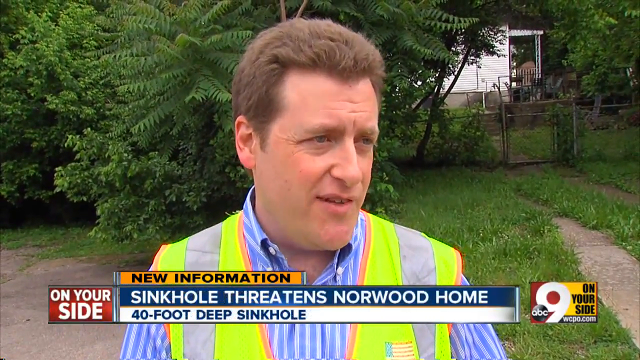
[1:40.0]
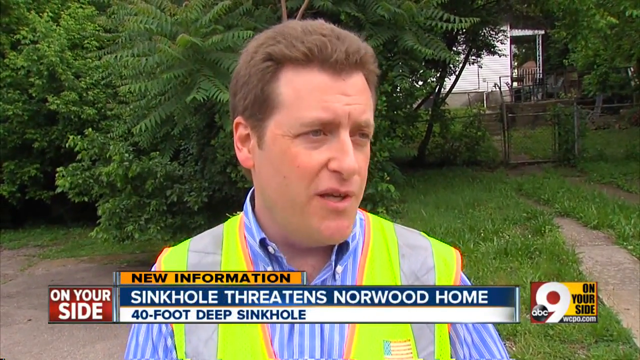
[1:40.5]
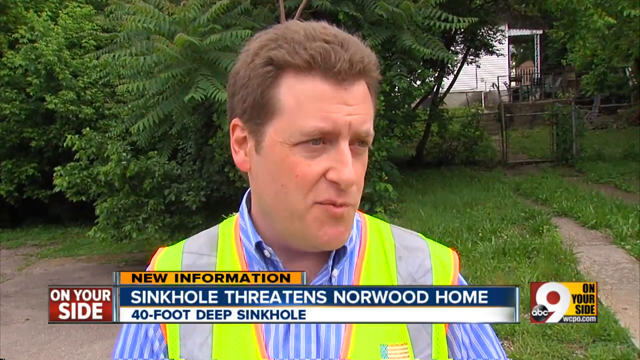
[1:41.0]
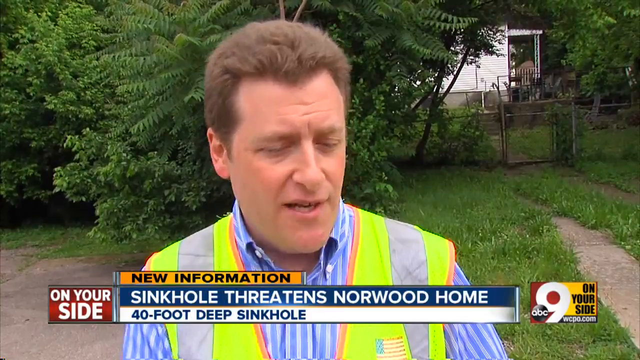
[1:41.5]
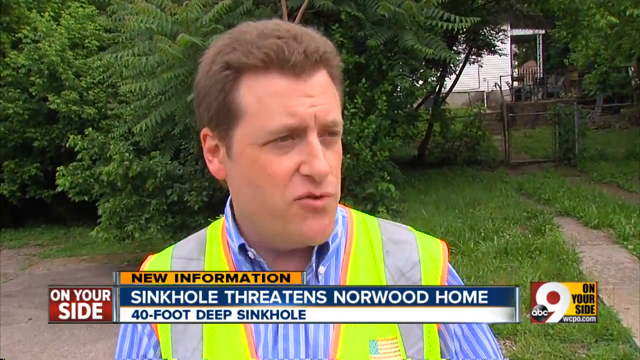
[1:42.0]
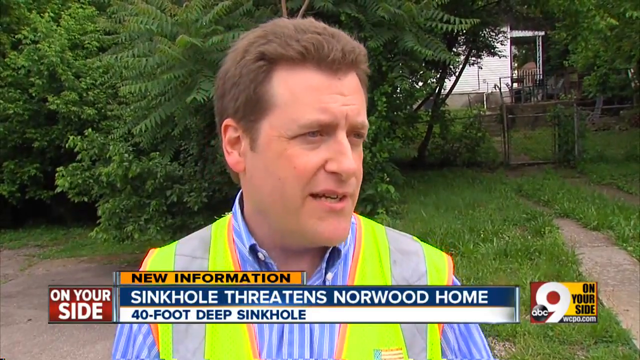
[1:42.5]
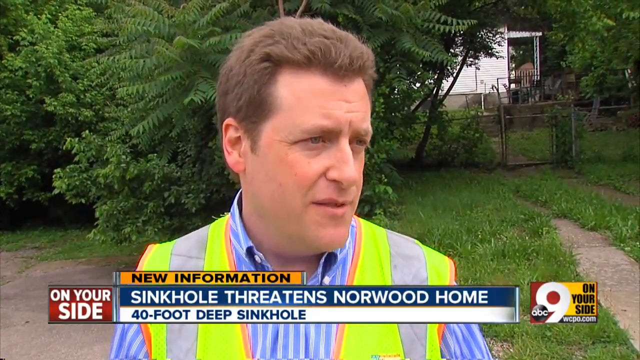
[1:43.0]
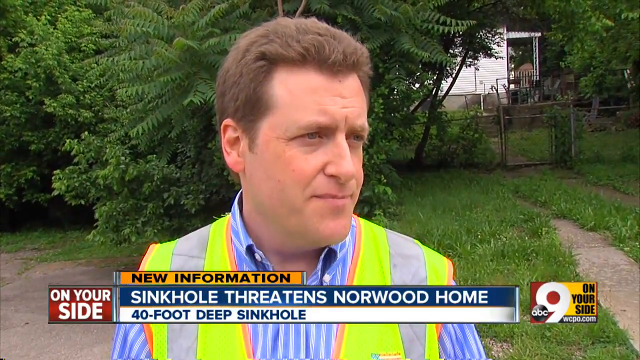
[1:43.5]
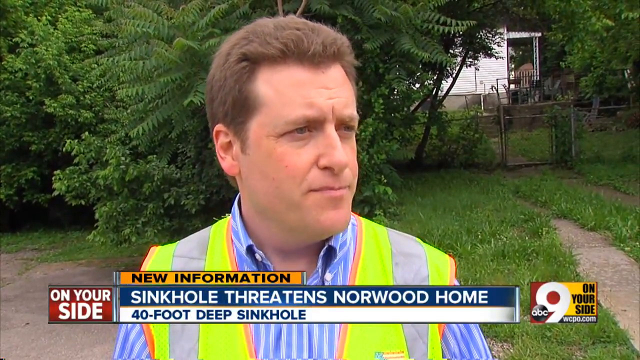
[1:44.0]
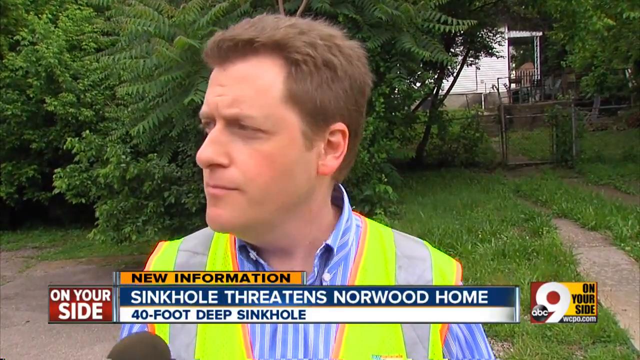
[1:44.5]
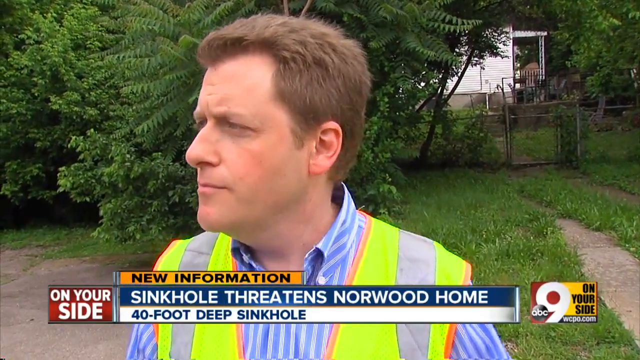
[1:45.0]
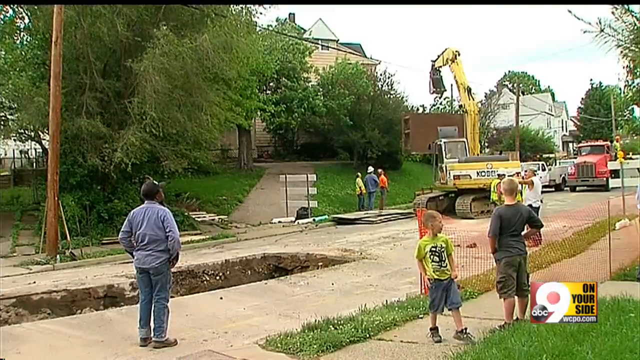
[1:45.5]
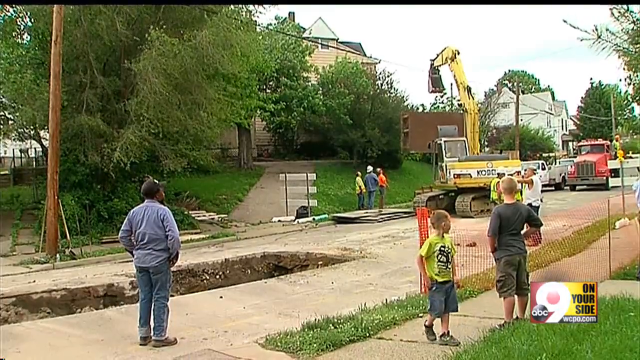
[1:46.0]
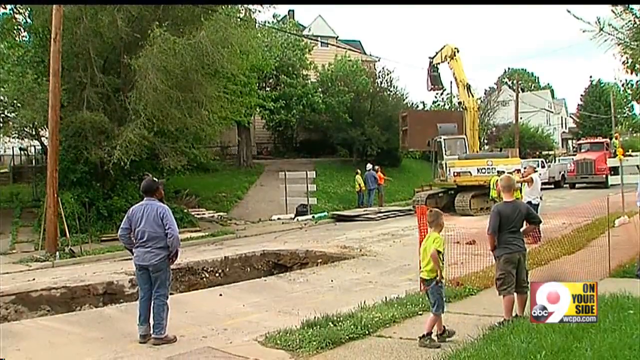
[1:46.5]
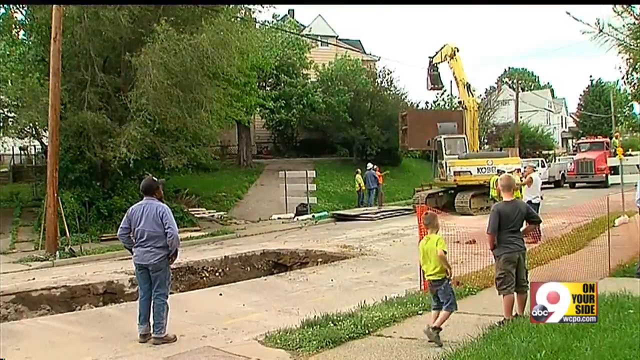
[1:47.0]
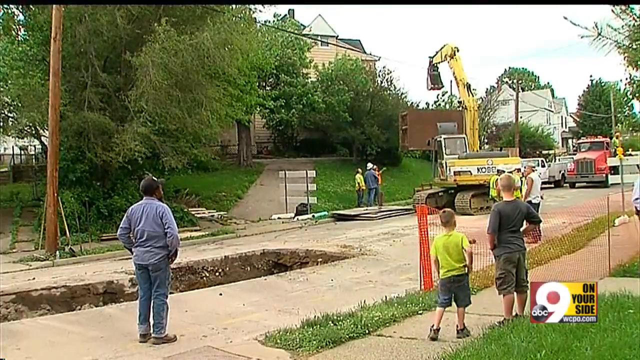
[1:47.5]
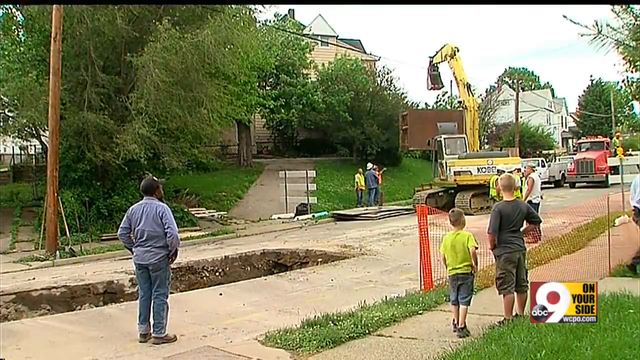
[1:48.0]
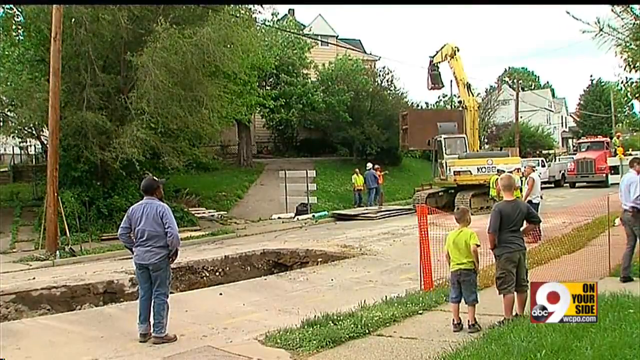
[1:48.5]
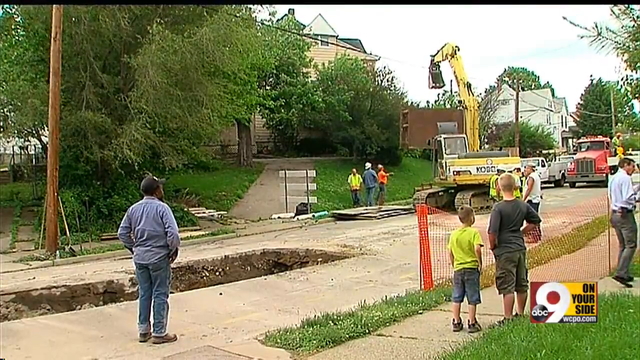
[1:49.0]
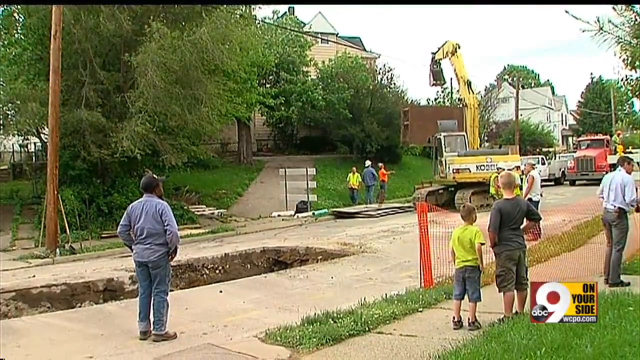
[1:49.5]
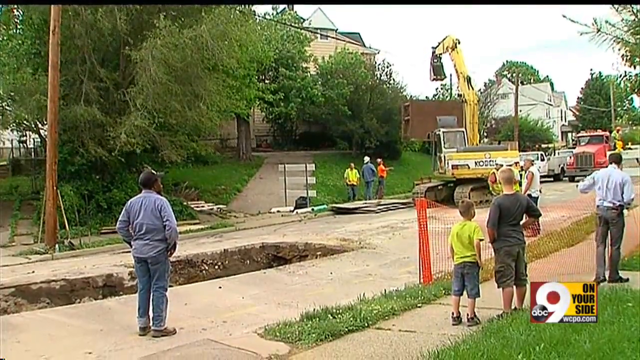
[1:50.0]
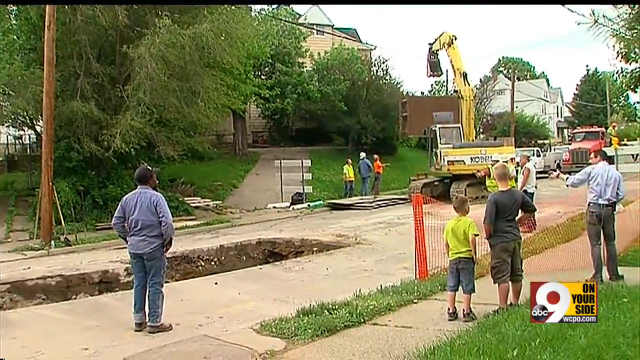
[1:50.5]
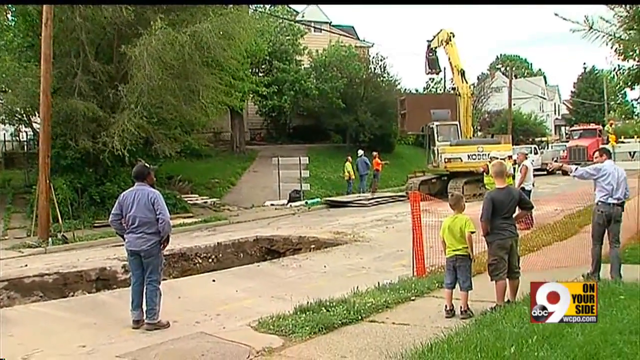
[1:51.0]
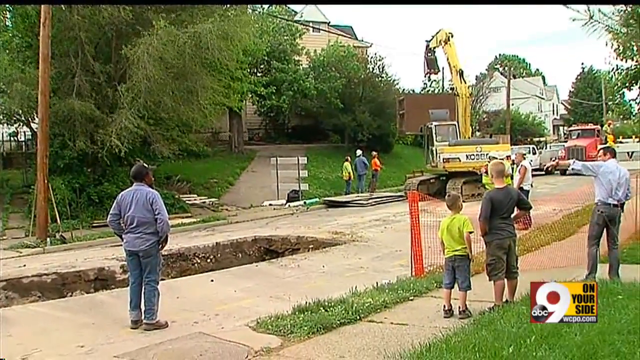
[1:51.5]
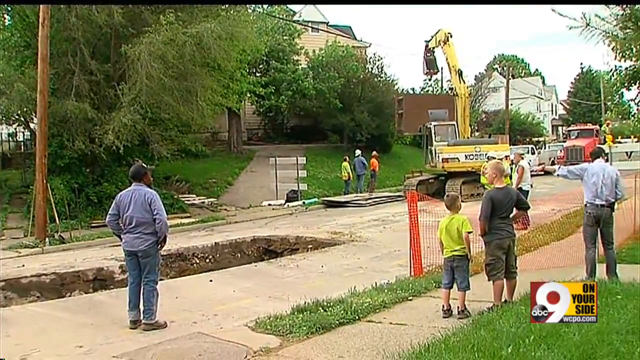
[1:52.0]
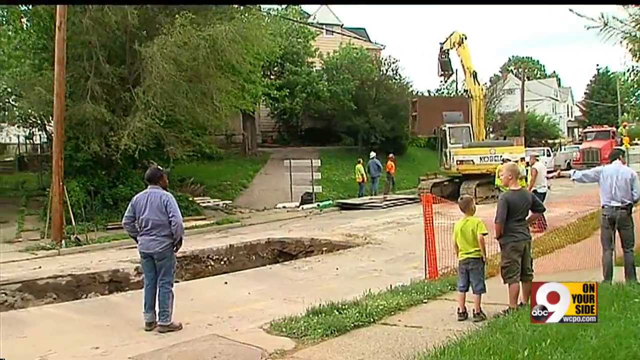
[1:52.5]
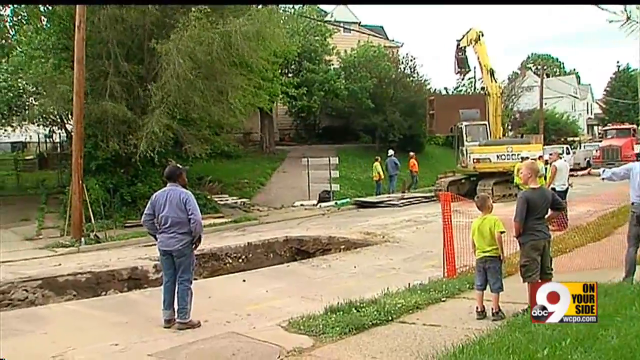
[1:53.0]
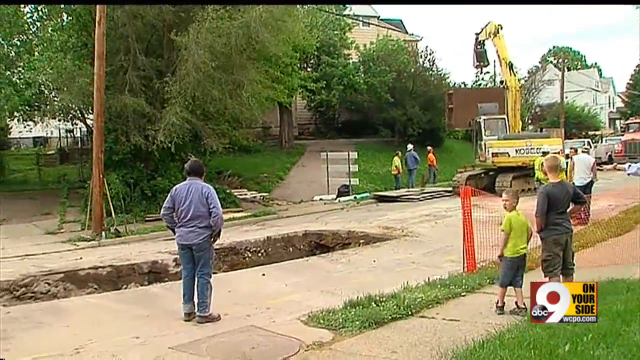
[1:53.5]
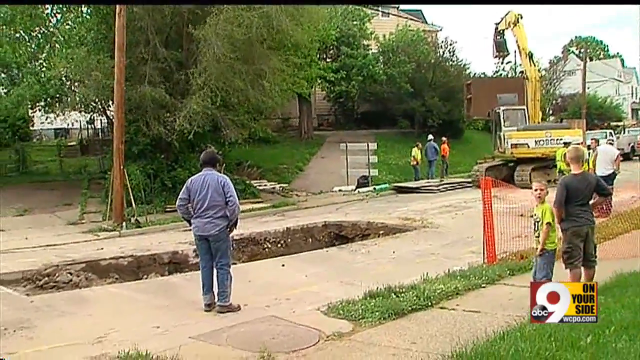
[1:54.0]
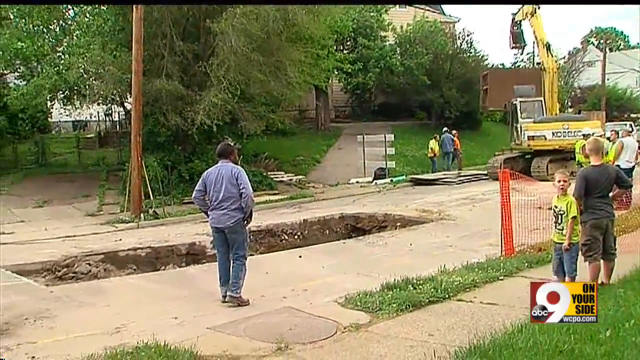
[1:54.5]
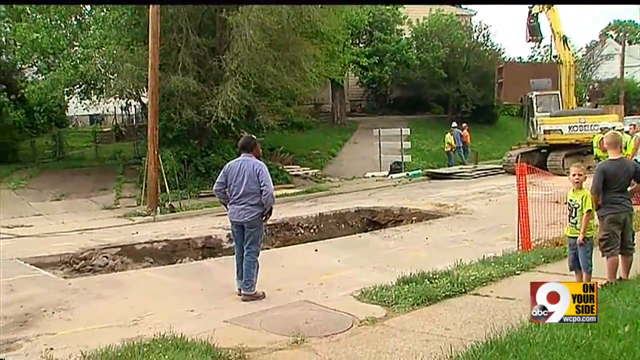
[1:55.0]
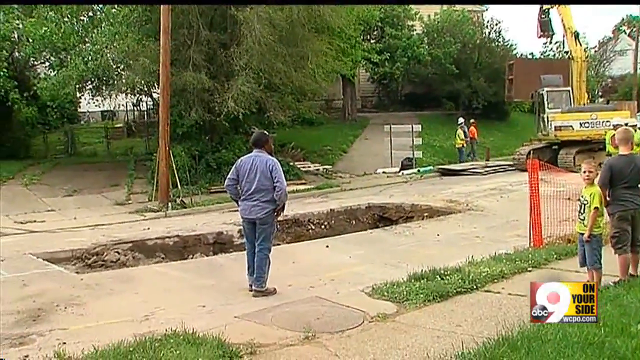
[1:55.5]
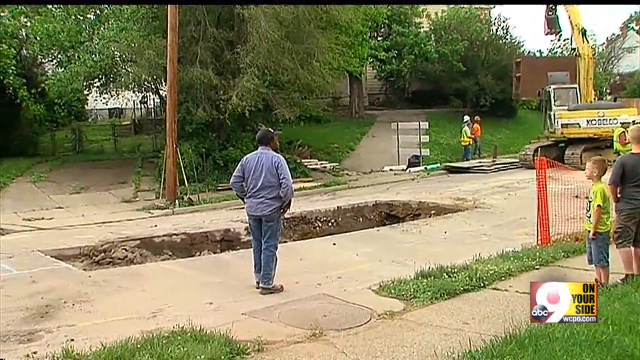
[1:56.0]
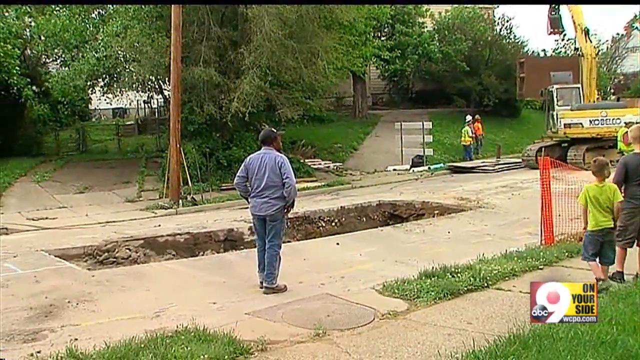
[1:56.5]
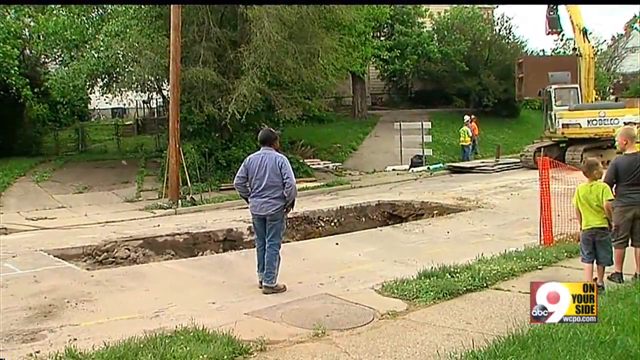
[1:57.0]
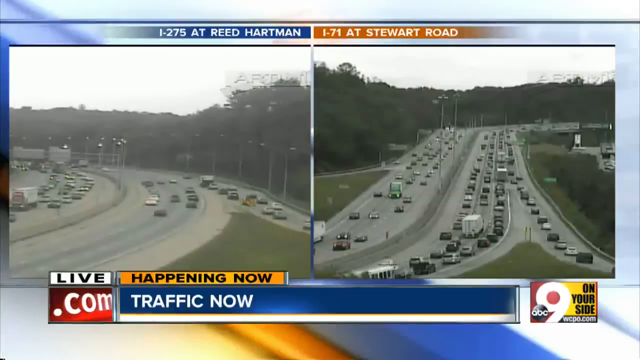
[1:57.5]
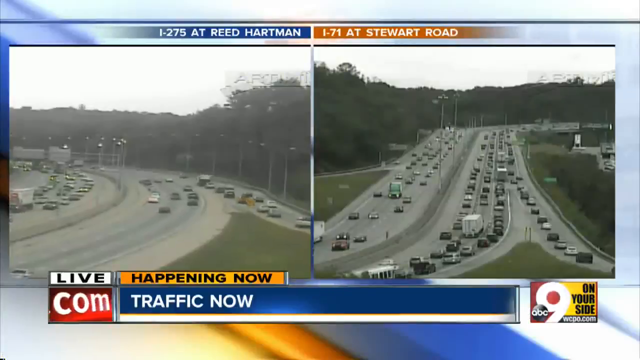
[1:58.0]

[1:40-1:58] The camera looks down into the sinkhole. Workers on the street have filled in the sinkhole and are spraying water on it. A man in a green vest is visible, and the homes on the street are much older. A stanchion has been set up to block traffic, five or six people are outside, and there appears to be a kid playing in a yard. The man who makes a statement is identified on screen as Mike Pittenger, "Metropolitan Sewer District," with the caption "Sinkhole threatens Norwood Home, 40-foot deep sinkhole." He has a neat haircut and wears a light blue striped shirt with a safety vest over it. Behind him are greenery, an overgrown tree, a very old, somewhat rusted gate, and an equally old home over his shoulder in the background. Another shot shows some heavy equipment.